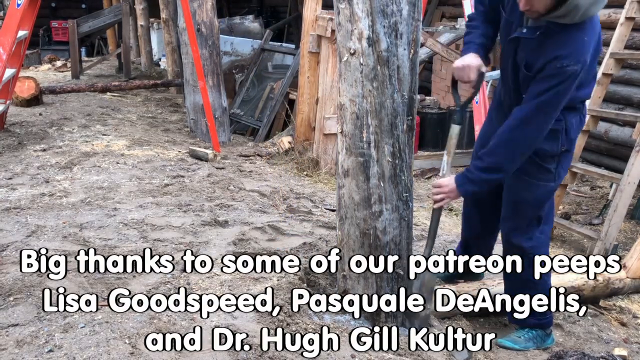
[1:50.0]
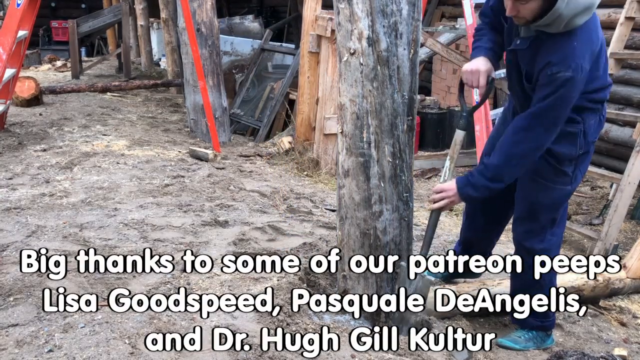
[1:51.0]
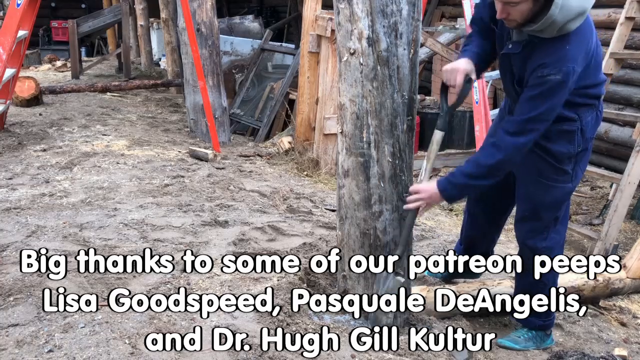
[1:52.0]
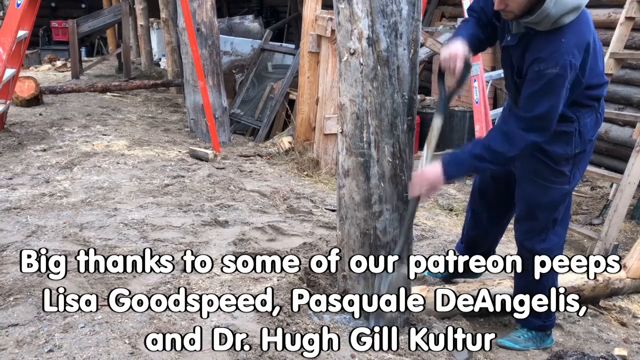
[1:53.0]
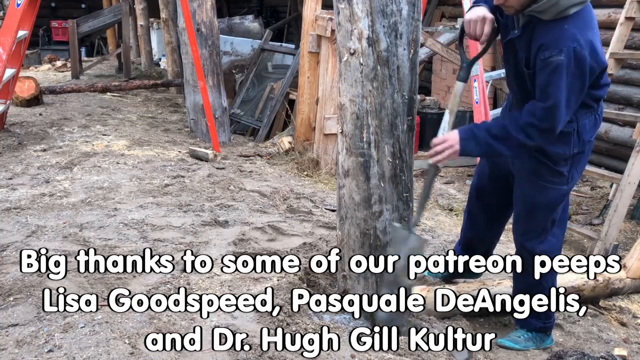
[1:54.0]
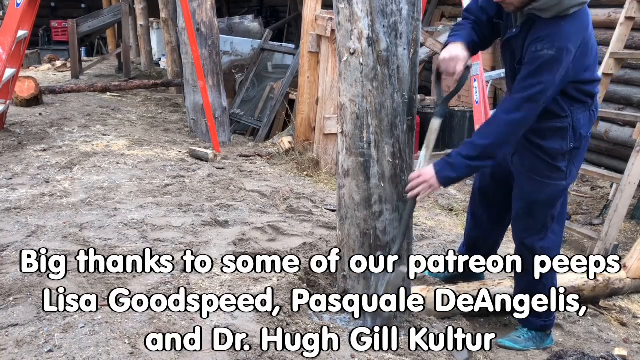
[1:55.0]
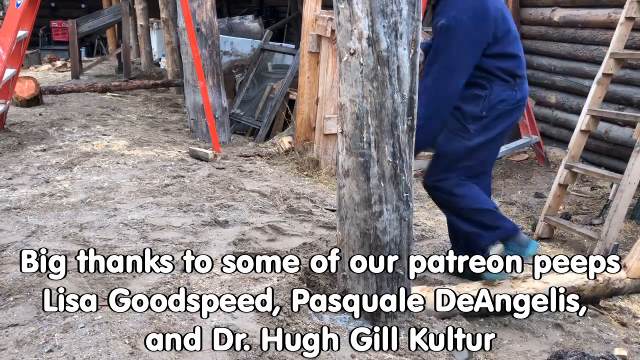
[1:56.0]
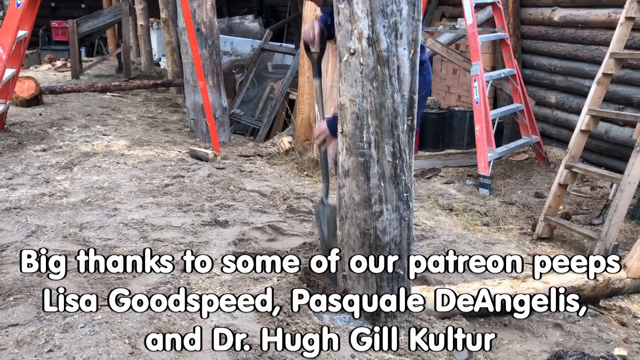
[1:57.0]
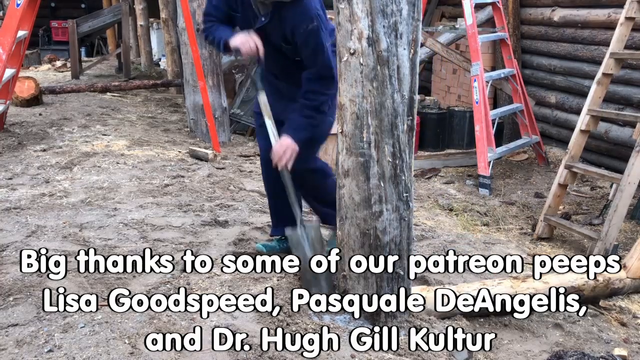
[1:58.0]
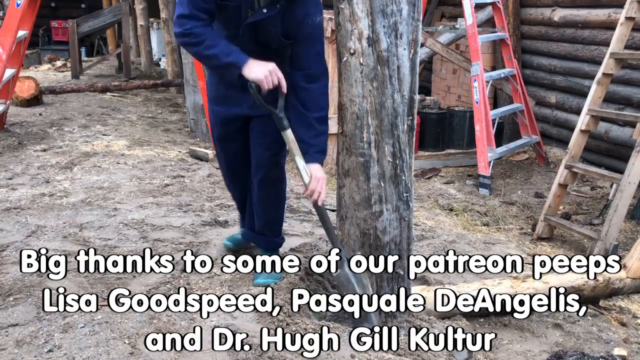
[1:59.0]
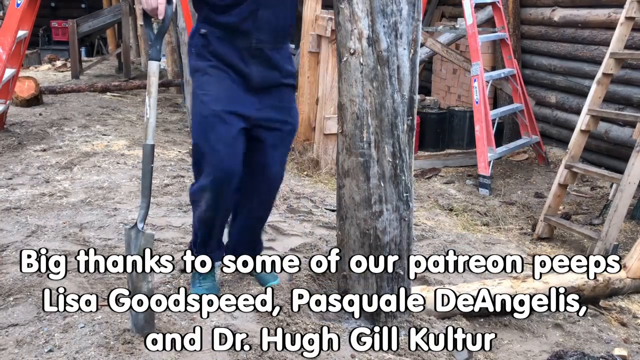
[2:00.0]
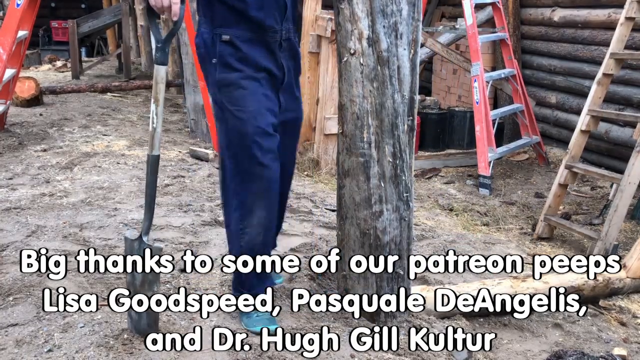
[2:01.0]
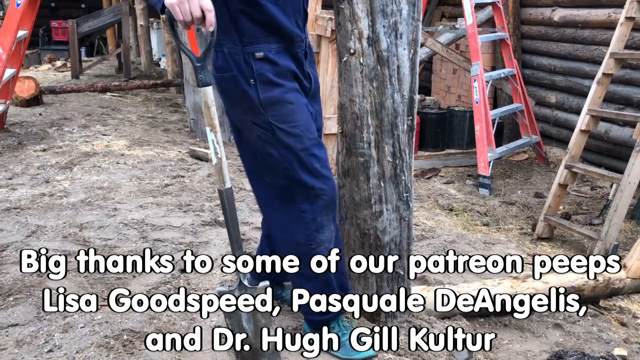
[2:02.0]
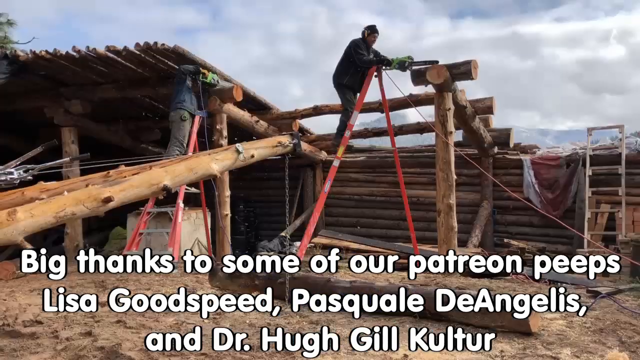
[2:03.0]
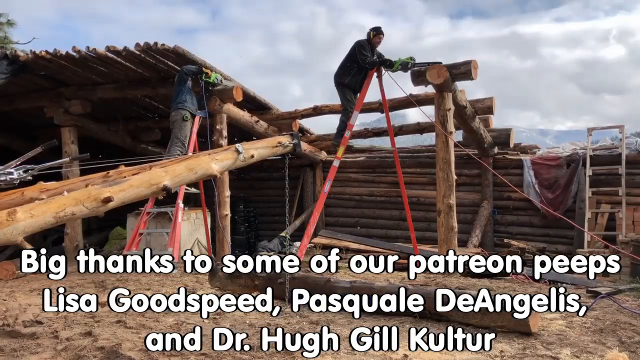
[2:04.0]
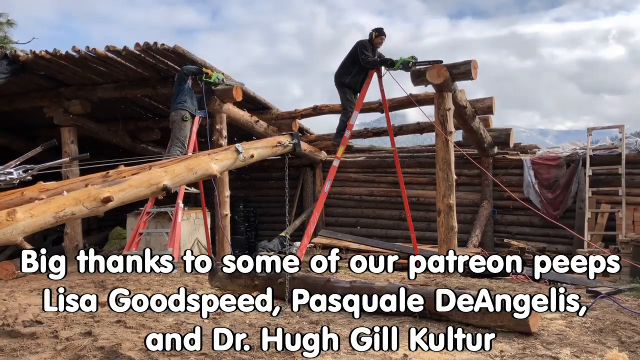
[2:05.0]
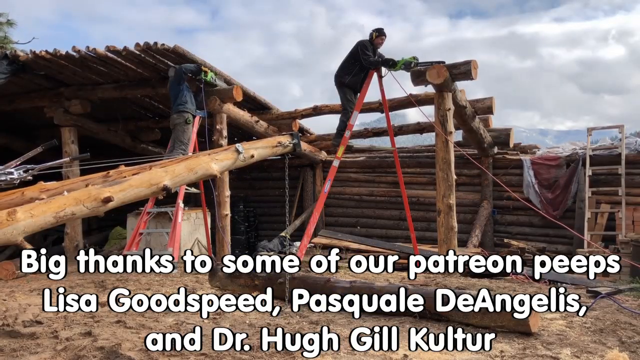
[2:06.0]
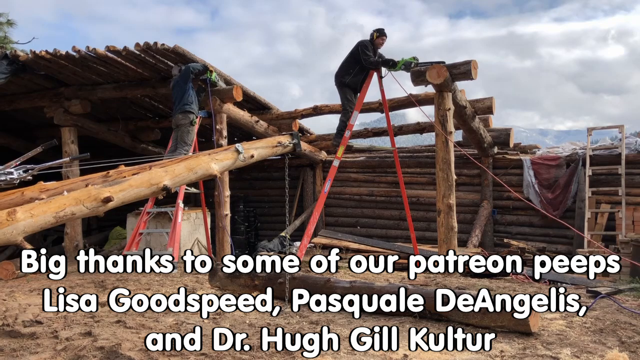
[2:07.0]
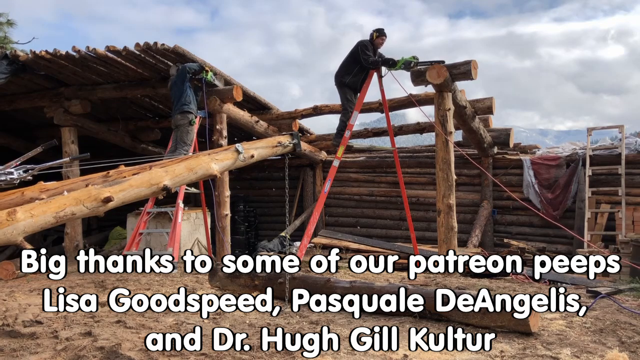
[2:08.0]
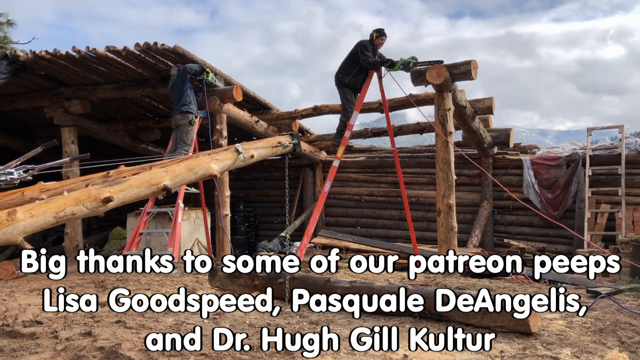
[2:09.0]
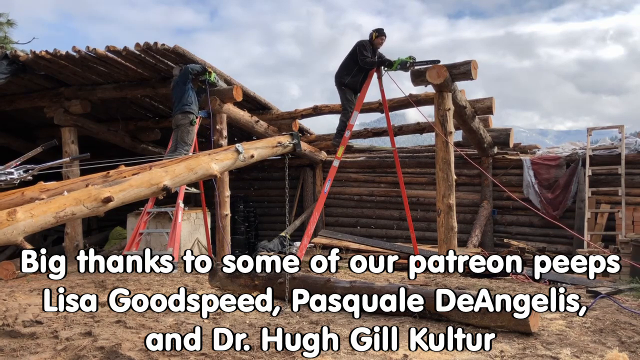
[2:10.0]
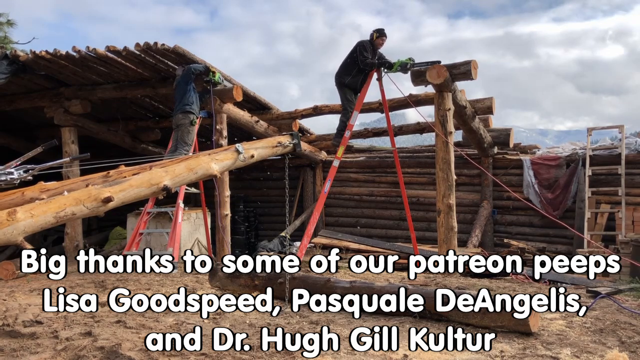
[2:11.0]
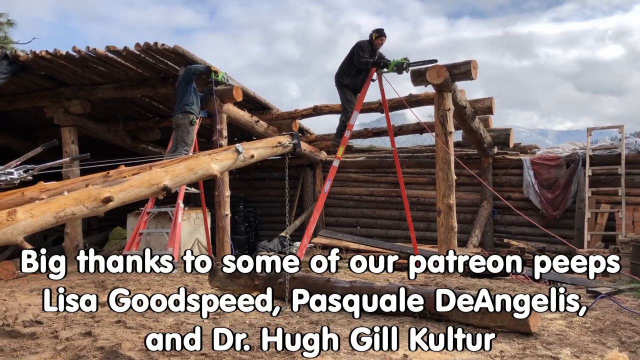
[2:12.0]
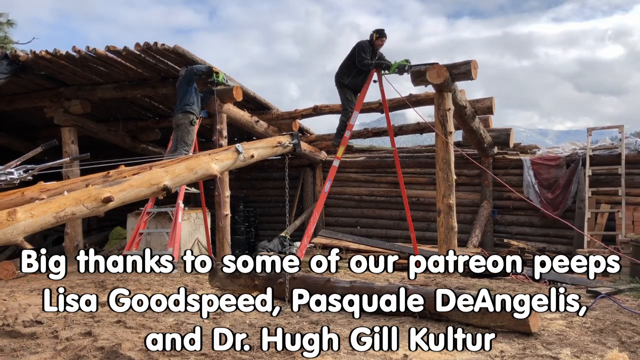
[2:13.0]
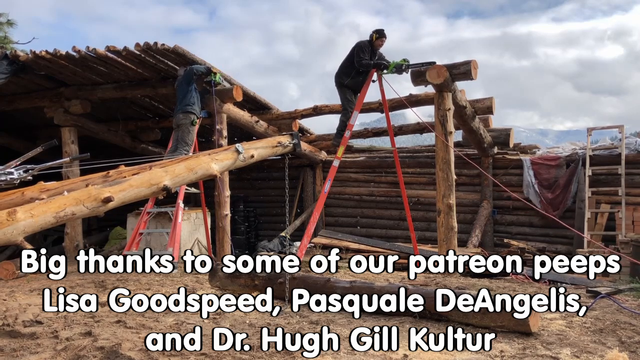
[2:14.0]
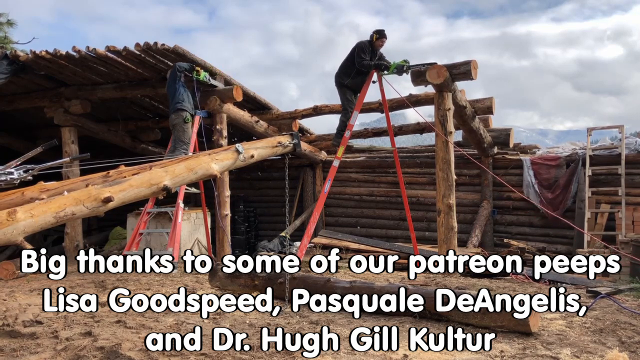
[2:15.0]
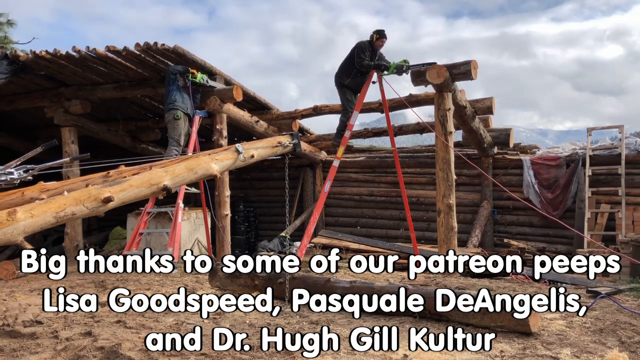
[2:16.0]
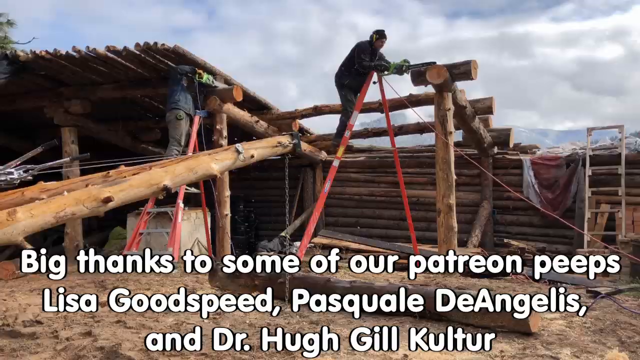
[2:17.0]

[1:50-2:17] Two men work on the construction of what looks like a large log cabin. Walls in the back are constructed of rows of logs, a ceiling is being constructed on the left side, also of rows of narrow wooden logs, and large wooden posts buried in the ground around the area support the structure. The man on the right is on top of a large red ladder with what looks like a chainsaw in his hand, cutting off part of a large log on top of a wooden post. The man on the left is also on a red ladder, using a chainsaw in a similar way. Text at the bottom of the screen reads "Big thanks to some of our patreon peeps Linda Goodspeed, Pasquale DeAngelis, and Dr. Hugh Gill Kultur."